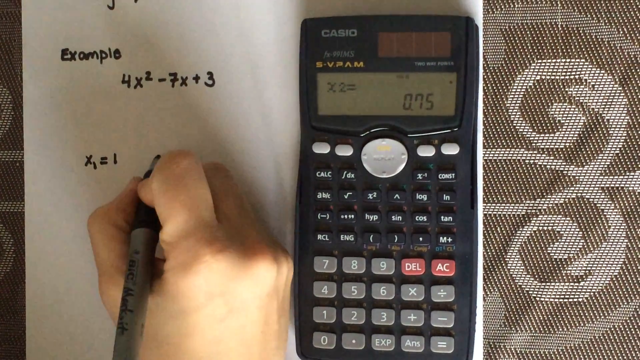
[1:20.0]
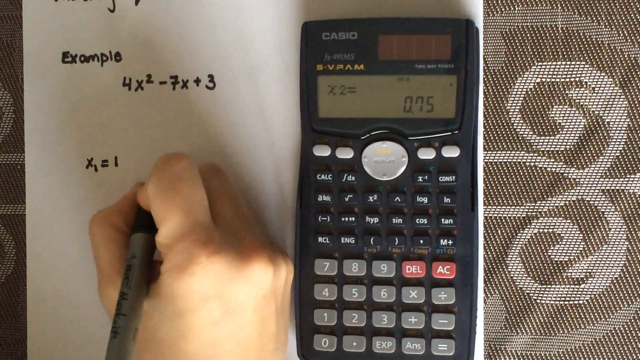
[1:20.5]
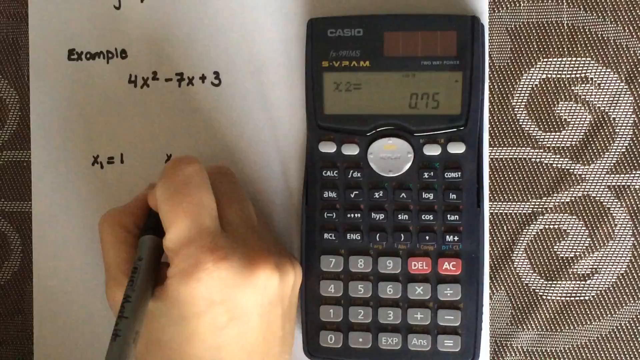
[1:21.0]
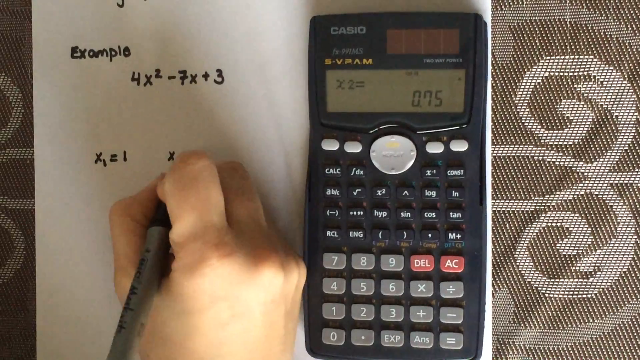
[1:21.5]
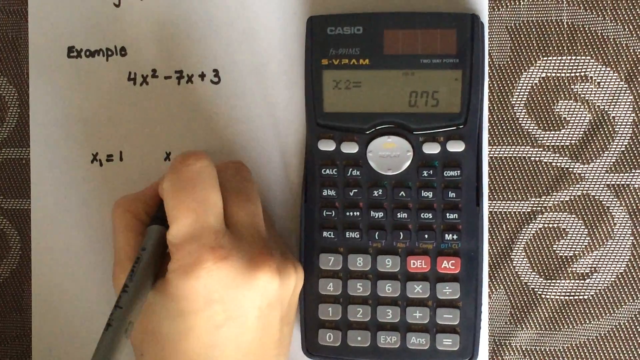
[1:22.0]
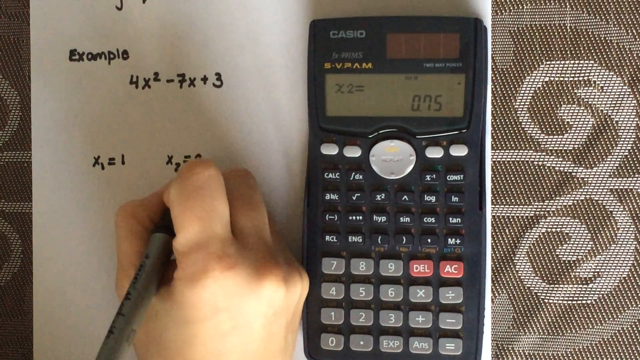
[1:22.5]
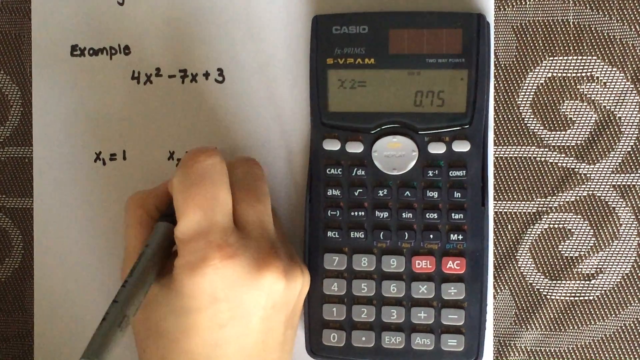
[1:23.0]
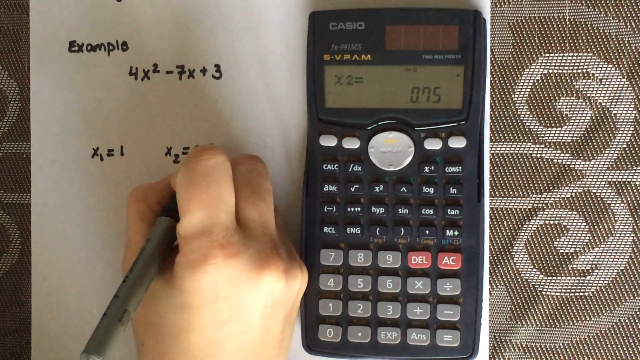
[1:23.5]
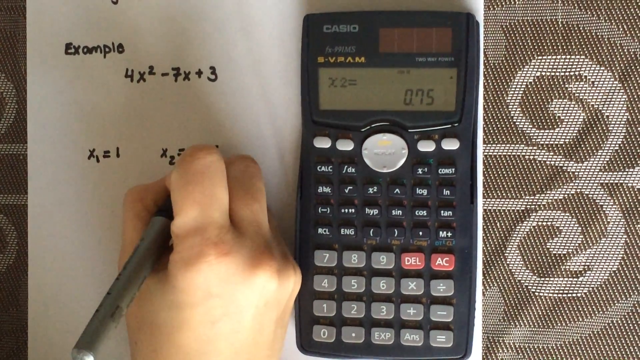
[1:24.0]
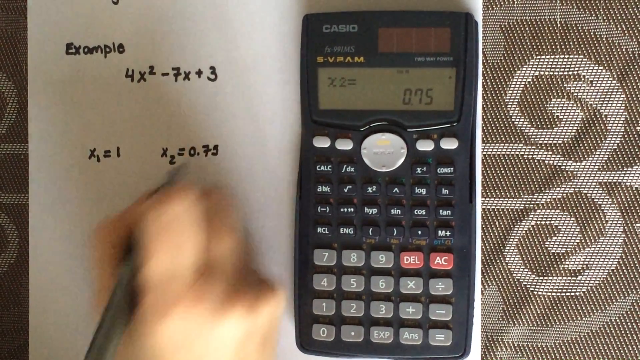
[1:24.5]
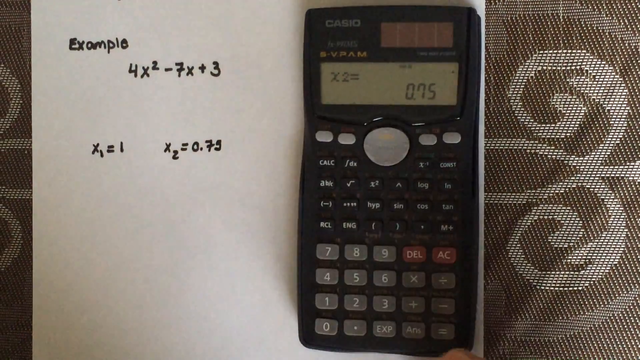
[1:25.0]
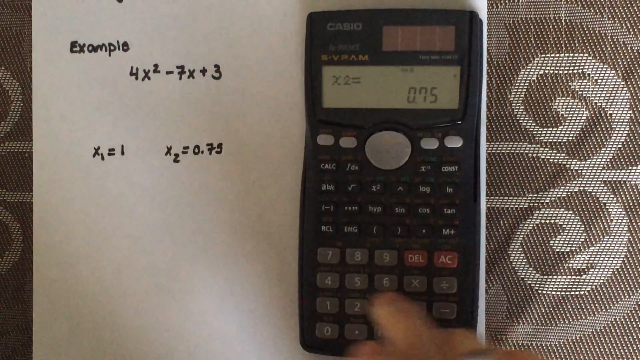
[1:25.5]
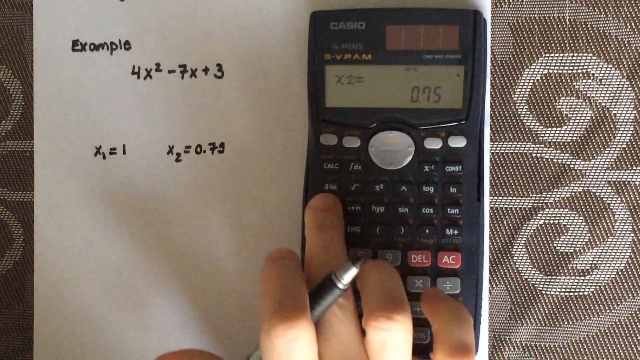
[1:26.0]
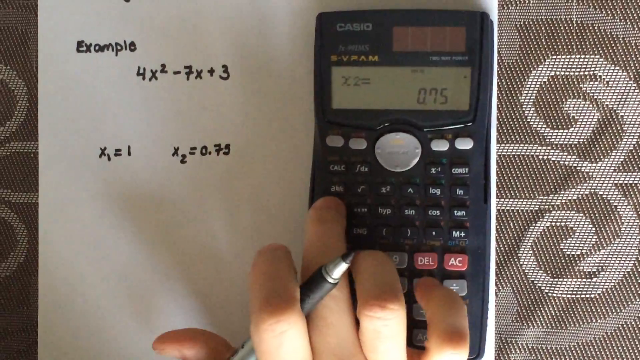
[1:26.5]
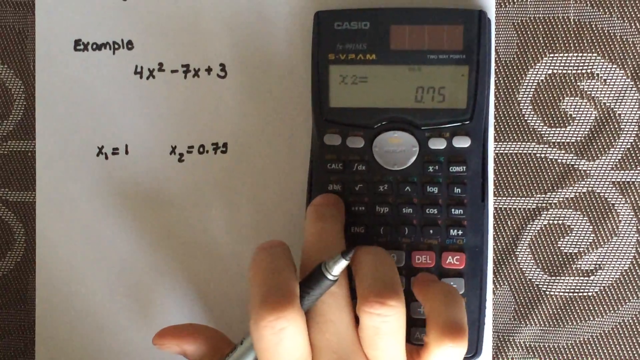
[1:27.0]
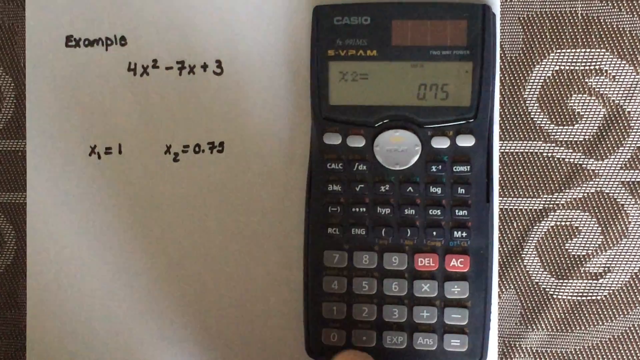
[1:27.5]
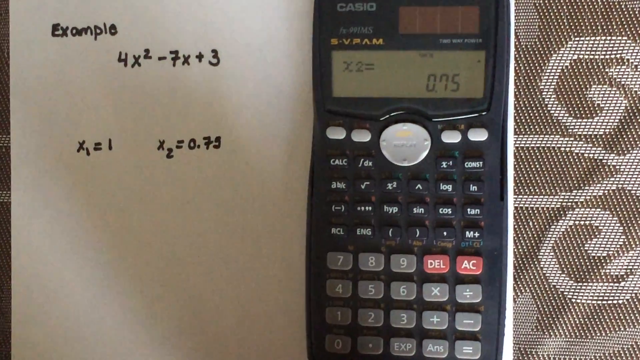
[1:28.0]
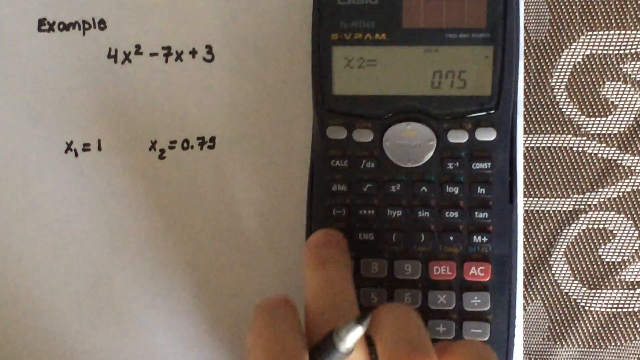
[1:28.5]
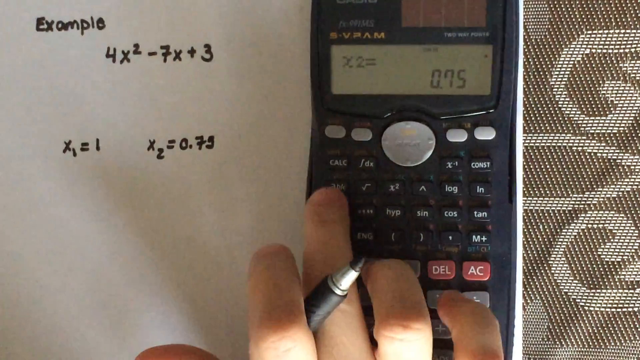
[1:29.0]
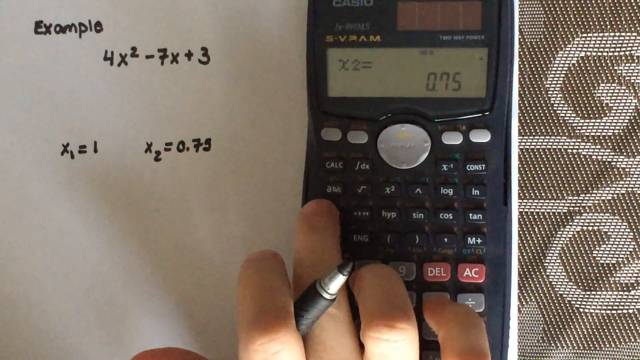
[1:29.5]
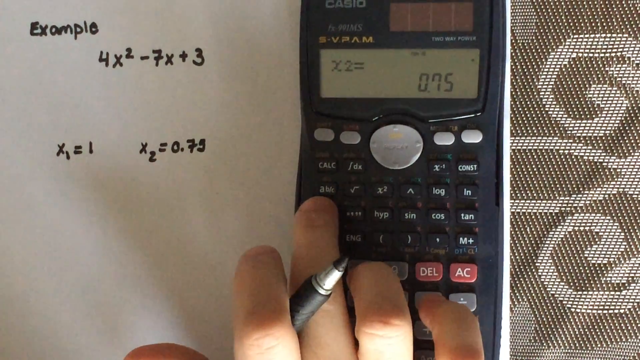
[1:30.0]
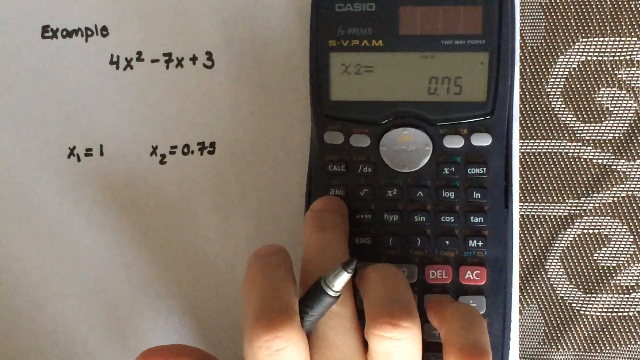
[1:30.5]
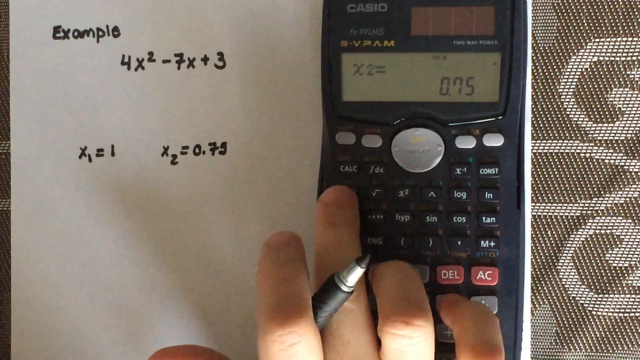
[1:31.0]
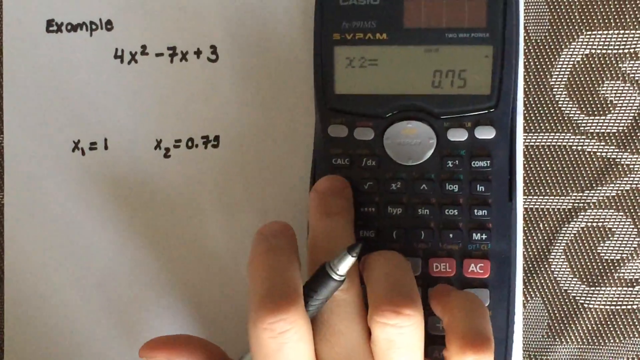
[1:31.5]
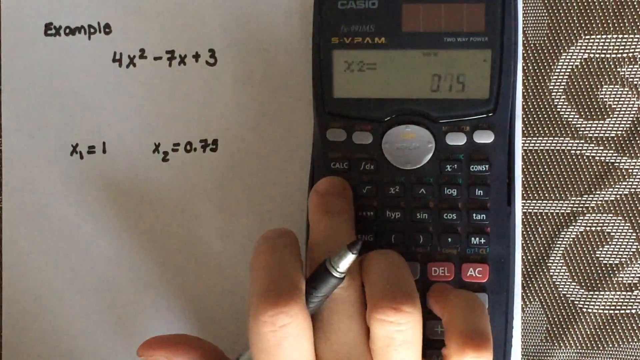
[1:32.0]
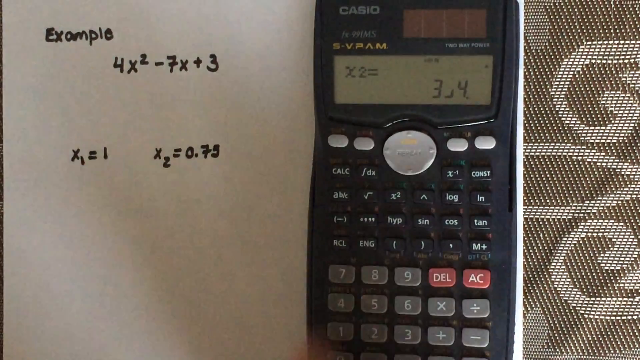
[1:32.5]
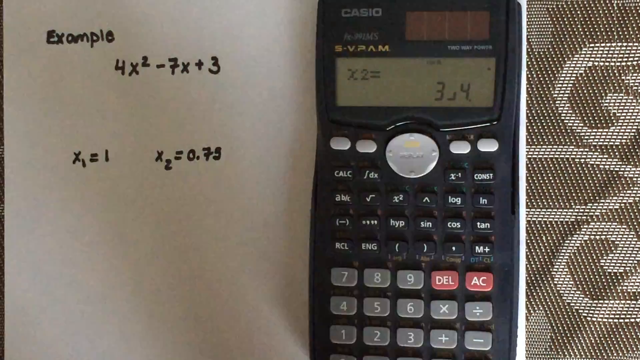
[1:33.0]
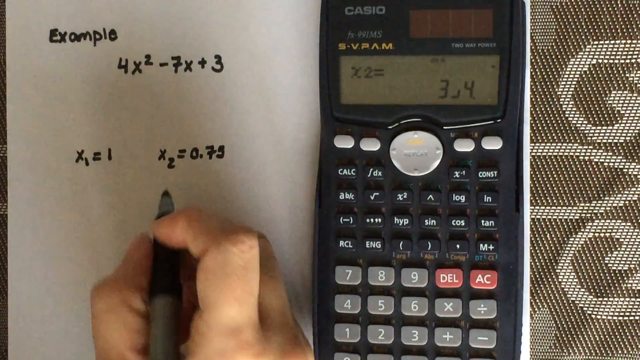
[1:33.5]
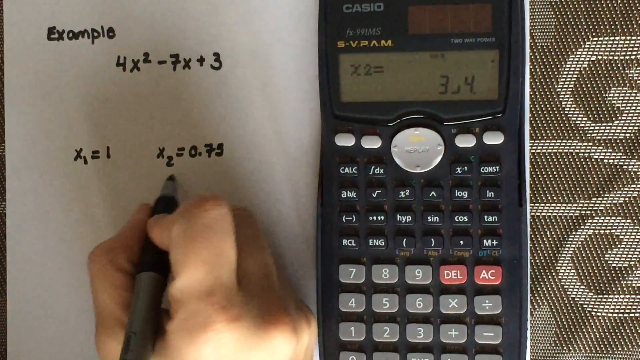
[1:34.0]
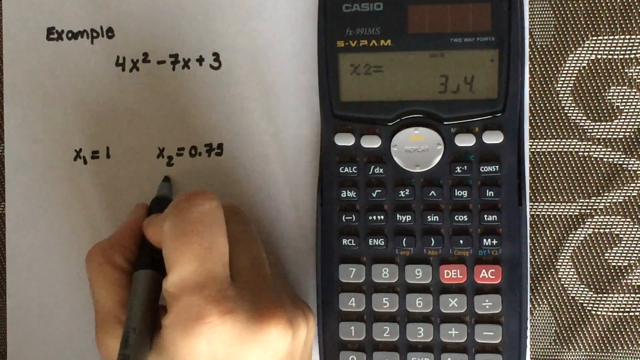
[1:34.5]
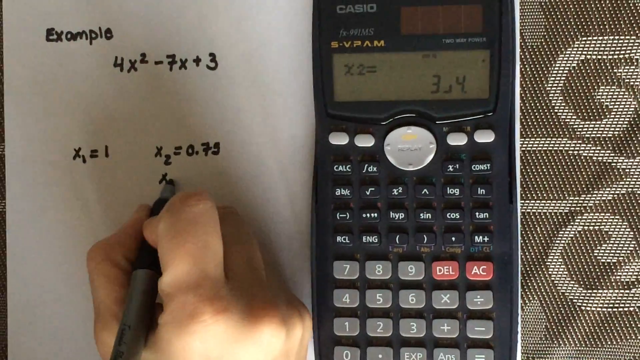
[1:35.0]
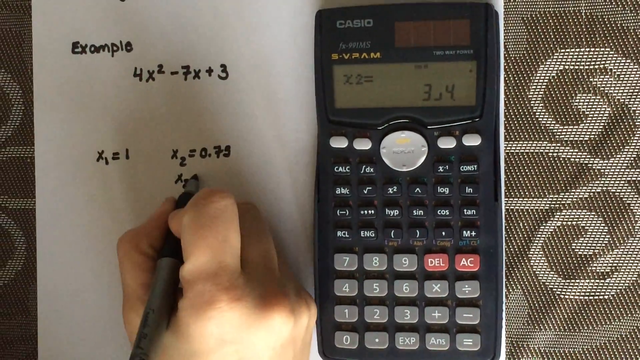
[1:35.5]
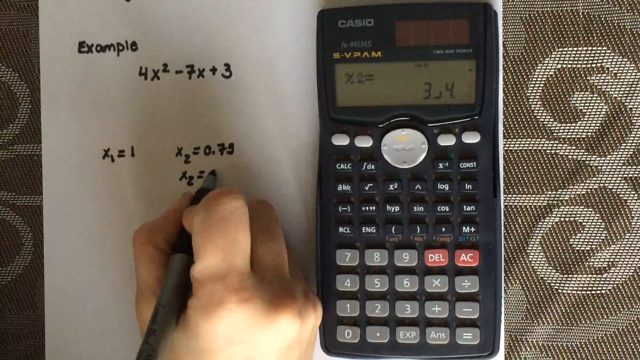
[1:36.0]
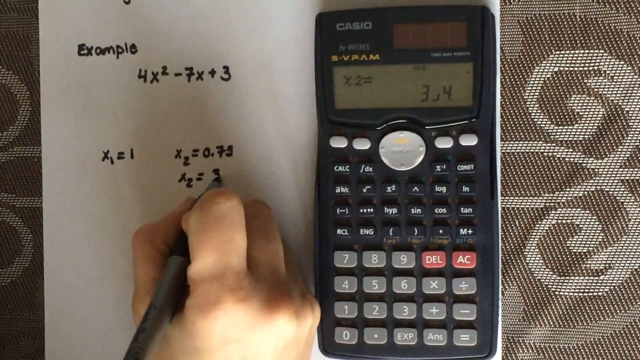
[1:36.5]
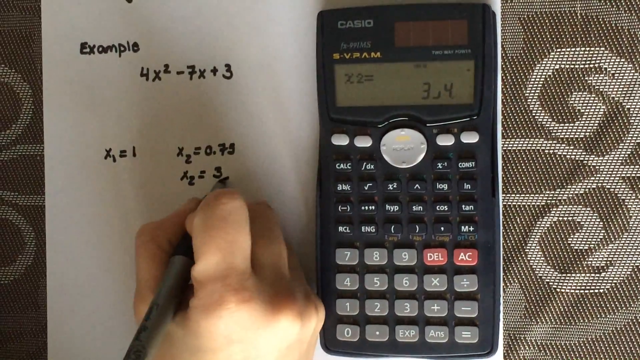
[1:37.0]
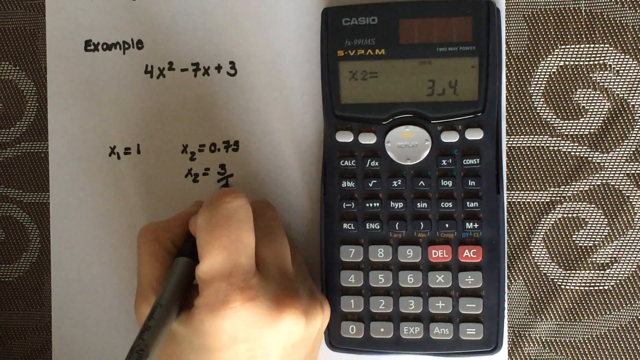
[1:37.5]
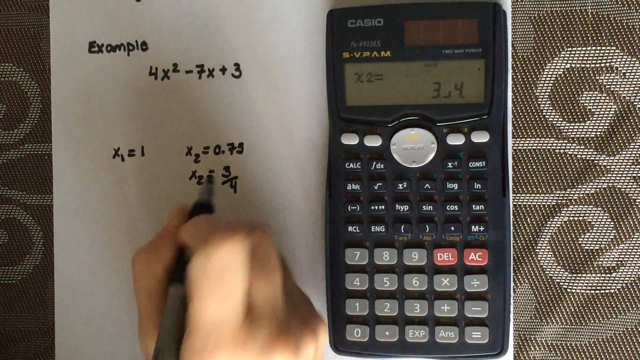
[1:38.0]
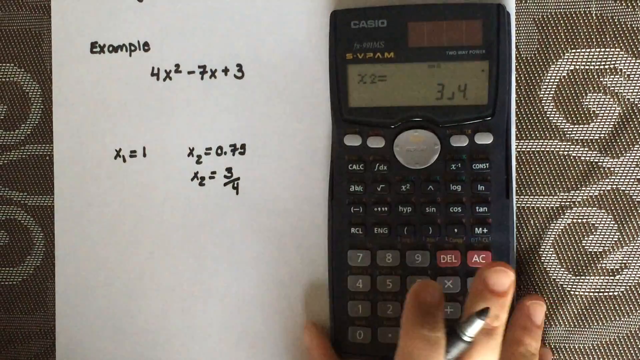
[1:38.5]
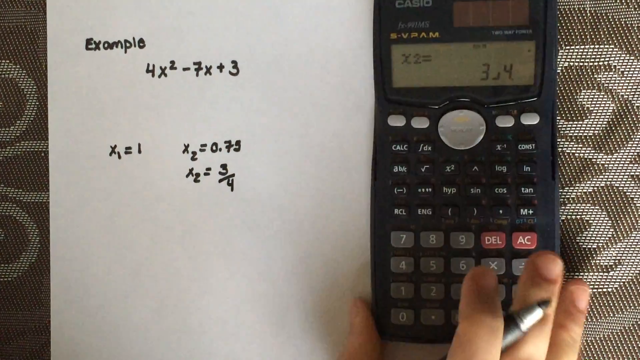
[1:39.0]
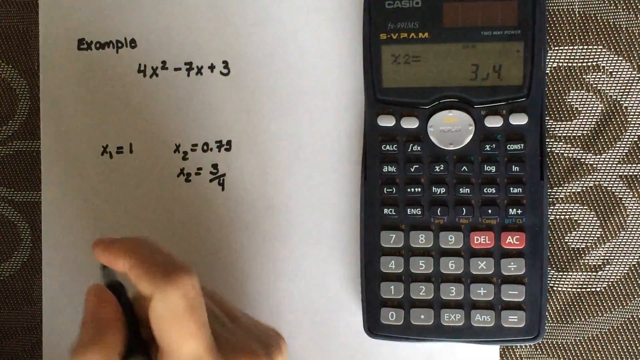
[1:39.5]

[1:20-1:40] The paper in the background has been written on in black marker and says example 4x squared minus 7x plus 3, x1 is 1, x2 is 0.75. The person presses various buttons on the calculator, and it shows x2 equals 3 divided by 4. Behind the paper is a background with a symmetrical design. The lighting is enough to clearly see what is written on the paper, the symbols on the calculator buttons and the background design. A Caucasian hand writes various numbers on the paper with the pen.